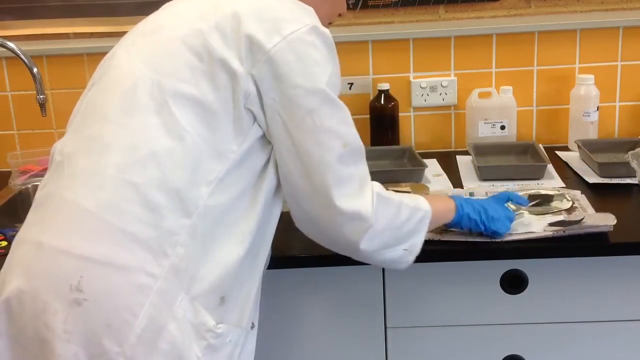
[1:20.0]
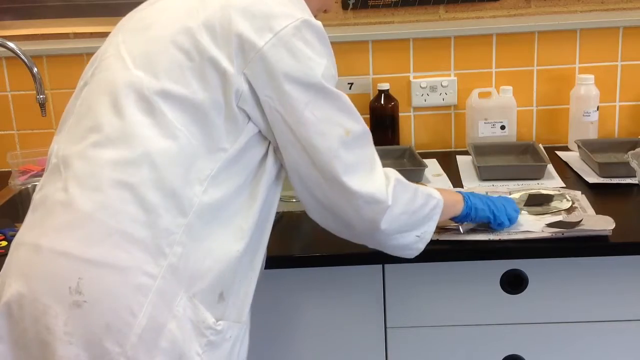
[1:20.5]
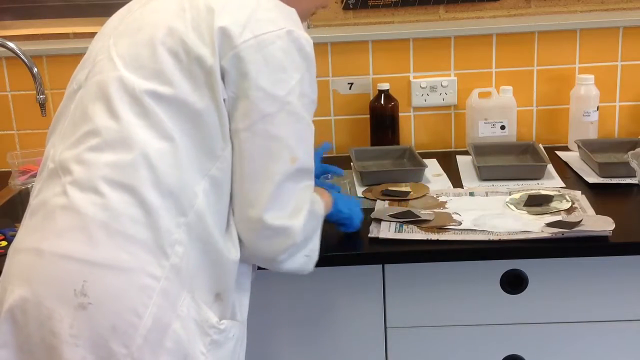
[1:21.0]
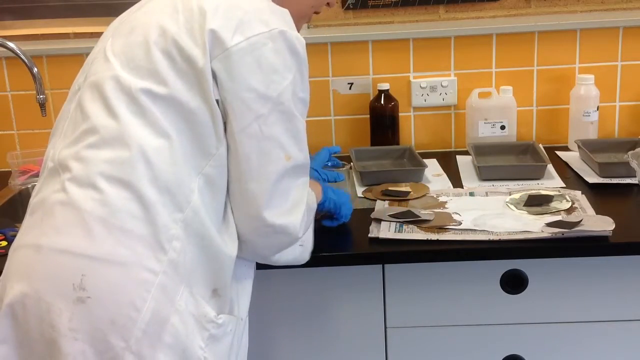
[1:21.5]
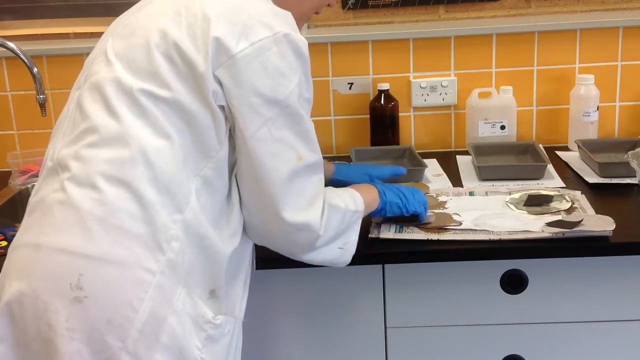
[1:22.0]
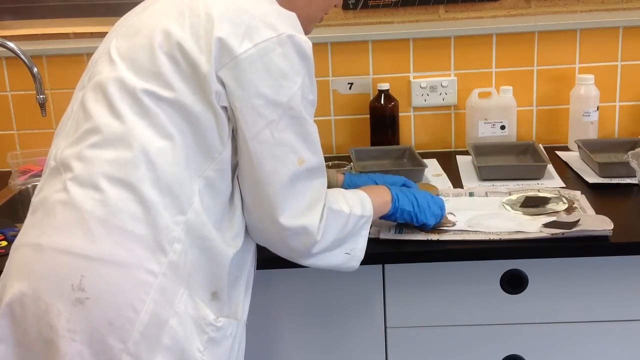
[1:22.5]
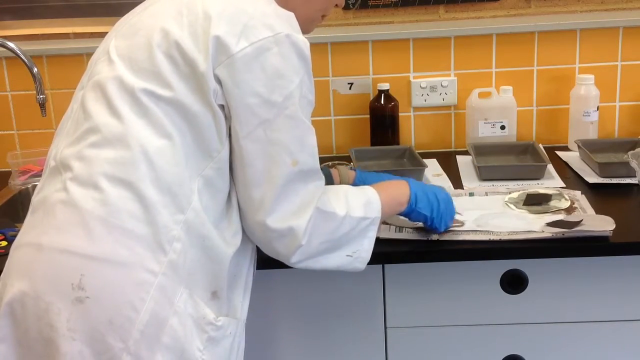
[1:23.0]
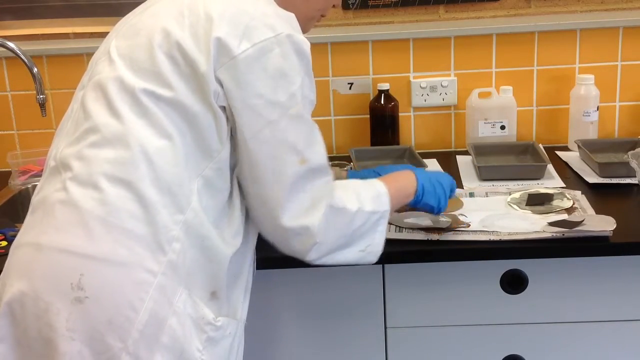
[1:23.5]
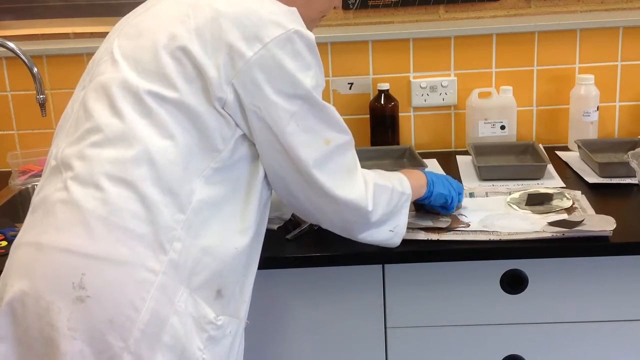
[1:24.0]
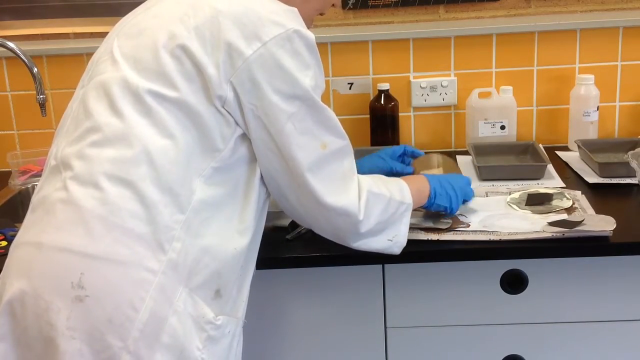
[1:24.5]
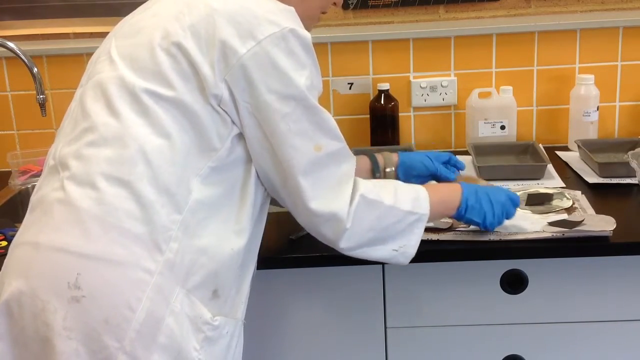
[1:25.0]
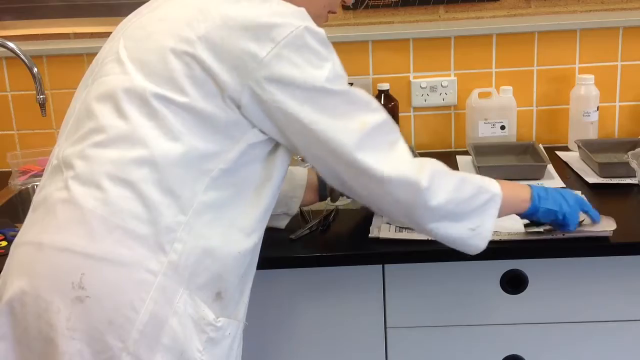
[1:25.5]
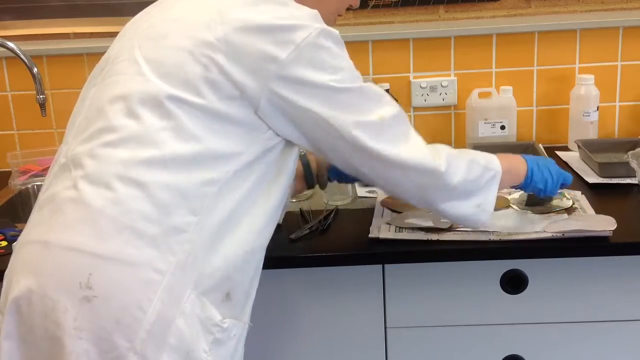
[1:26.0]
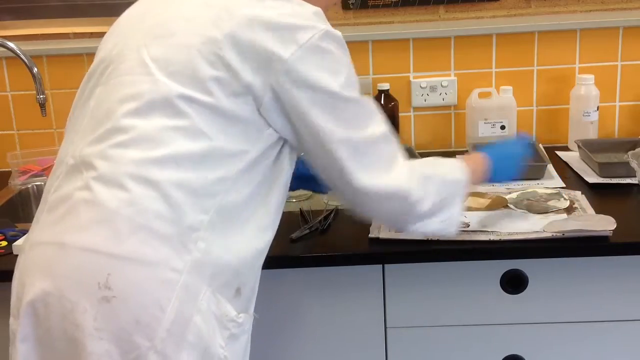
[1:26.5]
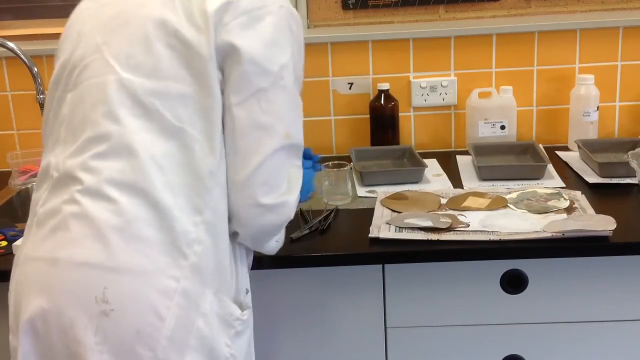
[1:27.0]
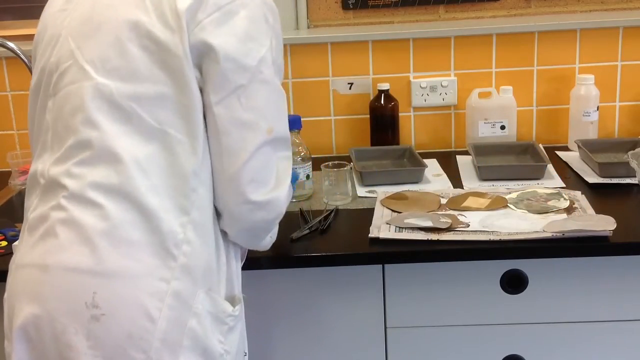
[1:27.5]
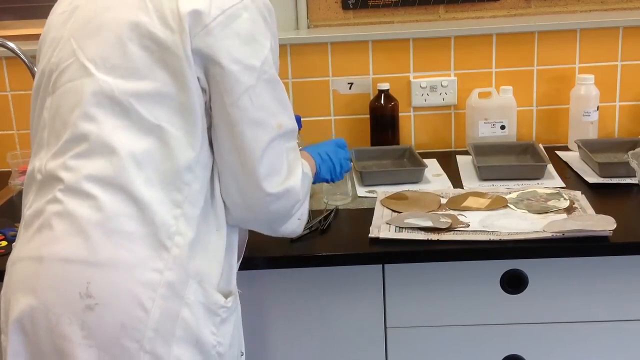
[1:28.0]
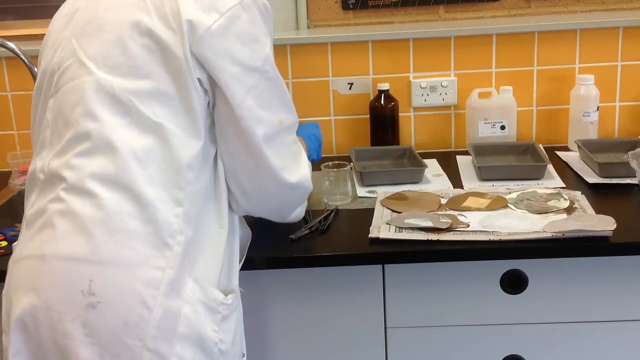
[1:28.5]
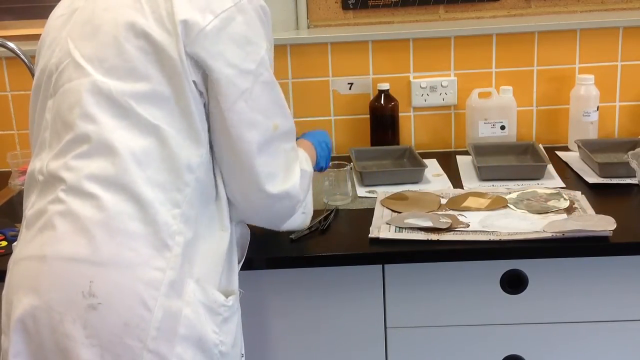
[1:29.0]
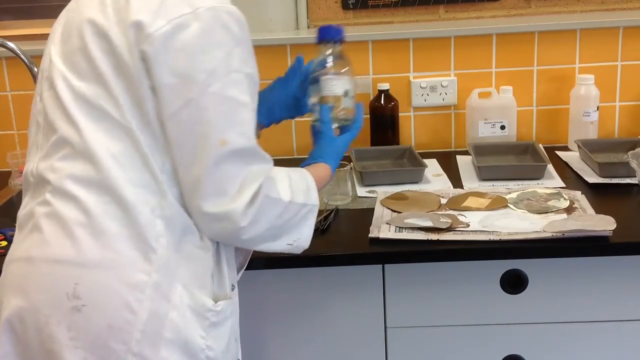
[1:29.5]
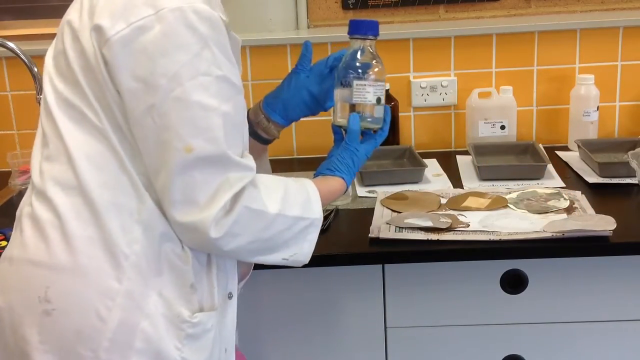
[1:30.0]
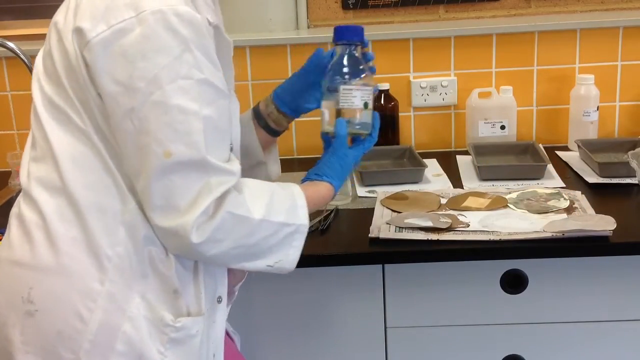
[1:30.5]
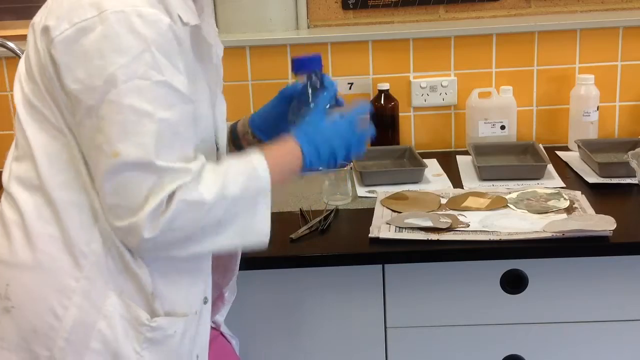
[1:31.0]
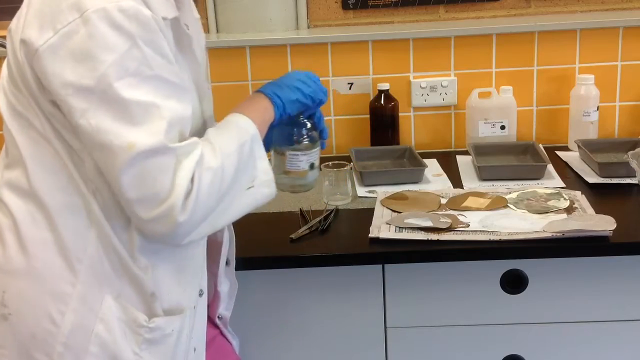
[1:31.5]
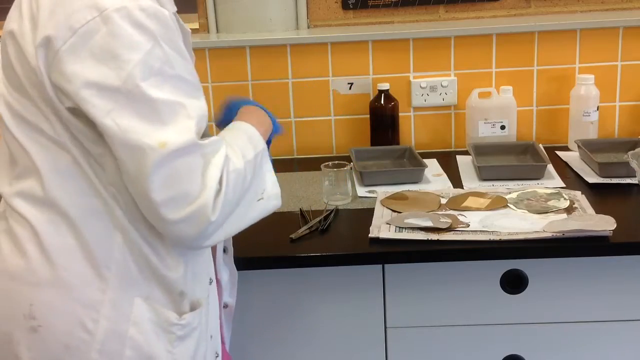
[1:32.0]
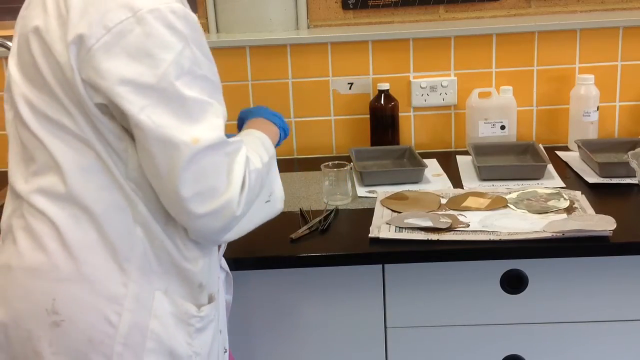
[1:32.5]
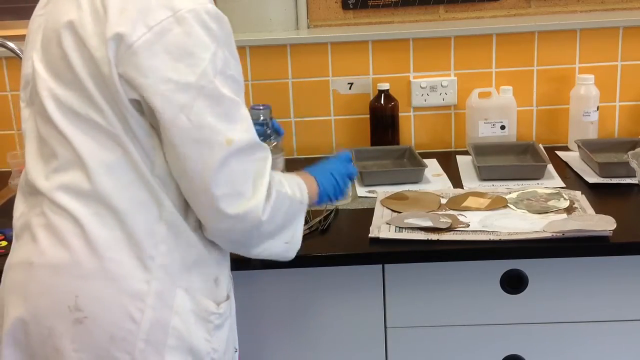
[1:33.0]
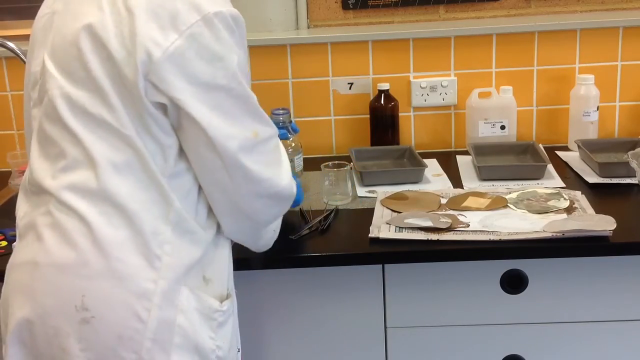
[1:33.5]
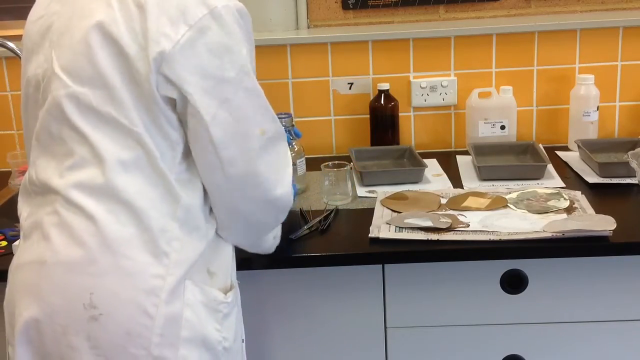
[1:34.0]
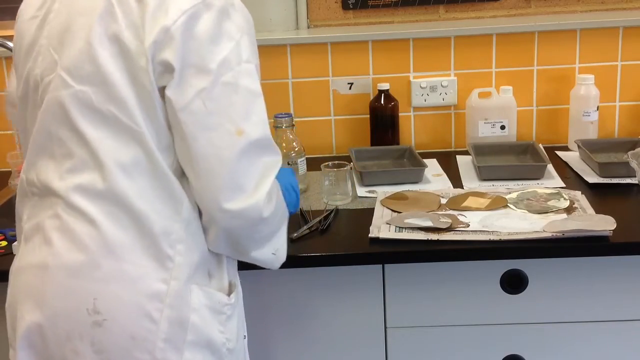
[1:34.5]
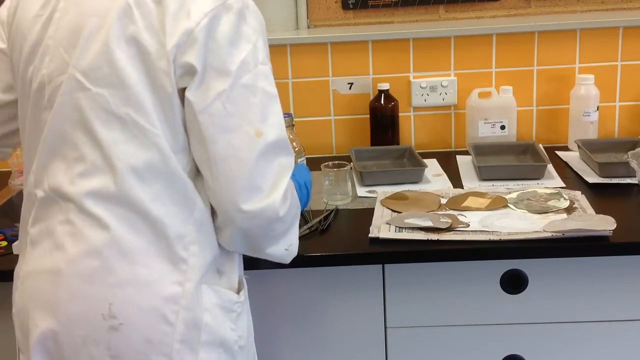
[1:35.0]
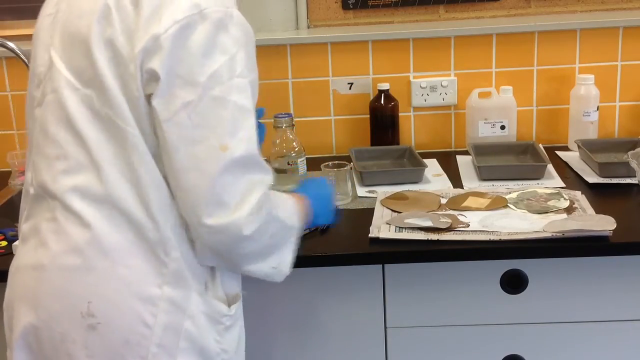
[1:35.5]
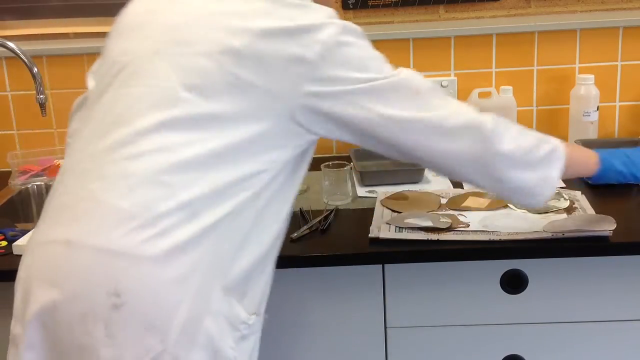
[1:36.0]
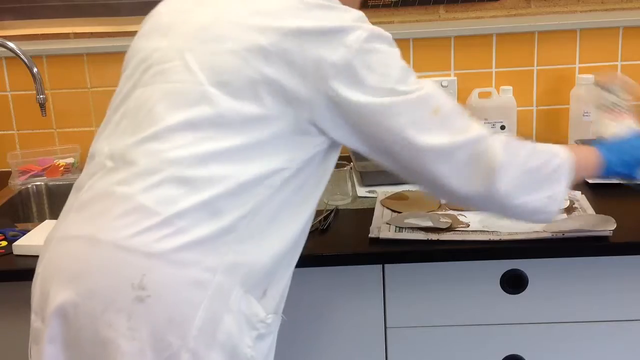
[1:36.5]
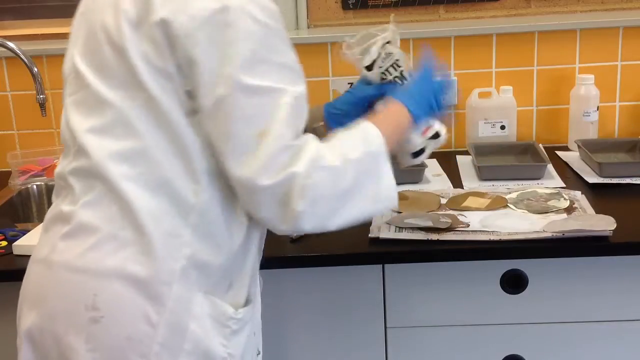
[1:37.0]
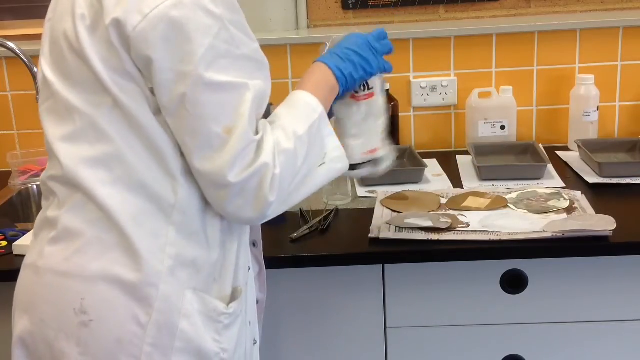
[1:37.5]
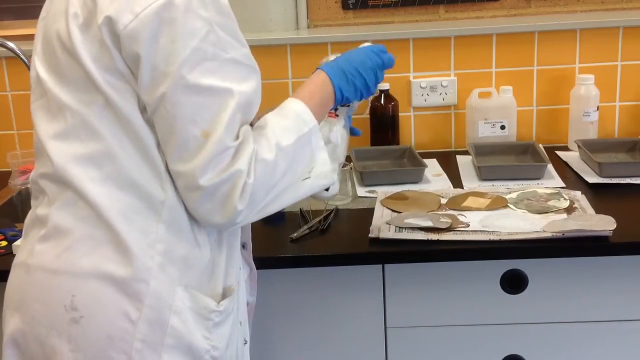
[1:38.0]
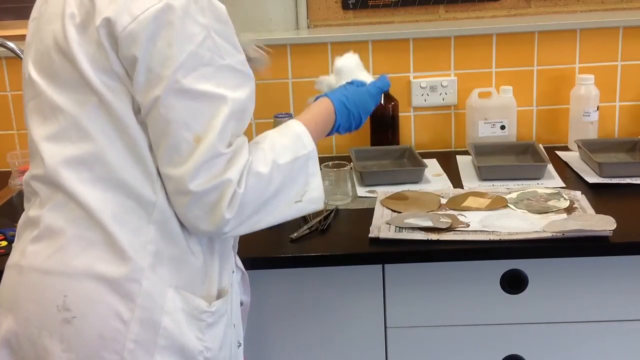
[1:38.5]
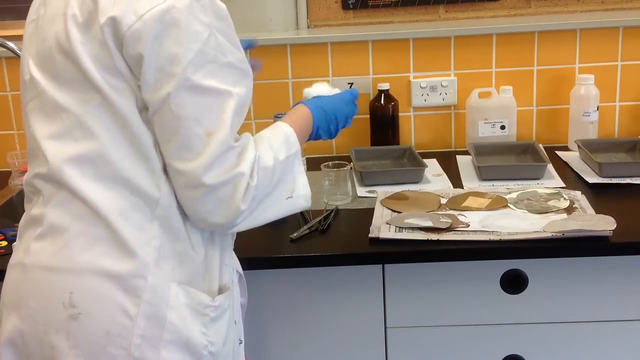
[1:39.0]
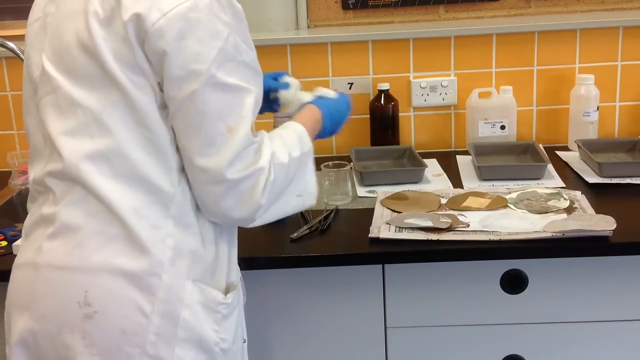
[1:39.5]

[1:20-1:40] A person on the left side of the screen stands with their side to the camera, their back visible, wearing a white lab coat and blue rubber gloves. She reaches down with her right hand, picks up round paper objects and square black paper objects from a piece of newspaper, and sorts them. She picks up a glass bottle with a blue top, holding it at the base with her right hand, then grabs the neck with her left hand and unscrews the cap with her right hand. With her right hand she reaches over and grabs a bag that looks like it has cotton in it, and places a piece of the cotton down into a beaker sitting on the counter.